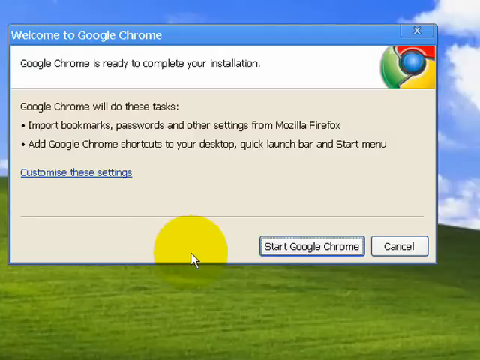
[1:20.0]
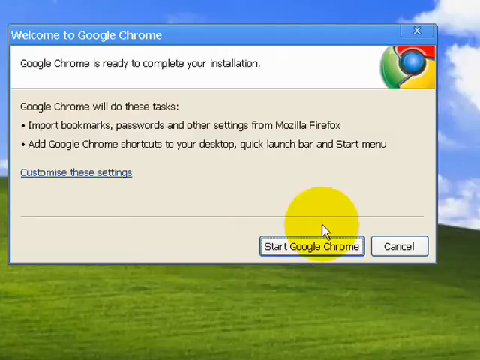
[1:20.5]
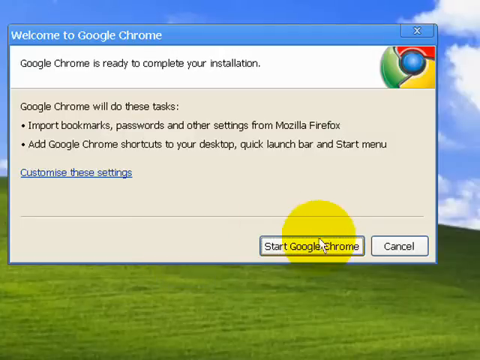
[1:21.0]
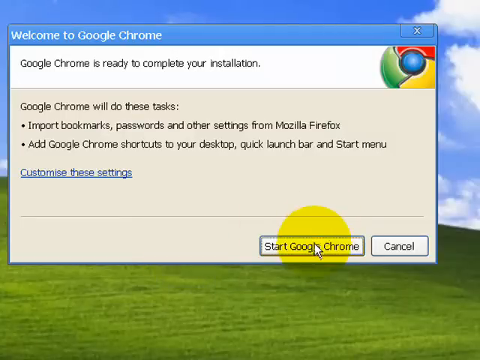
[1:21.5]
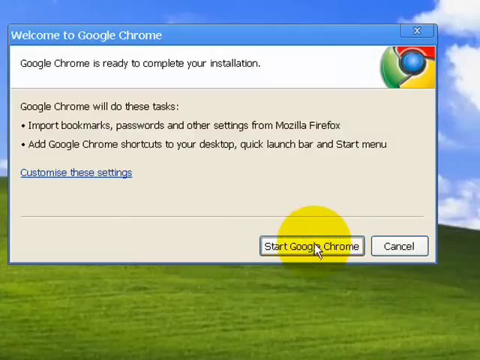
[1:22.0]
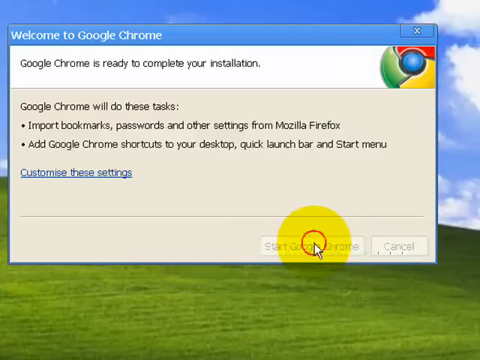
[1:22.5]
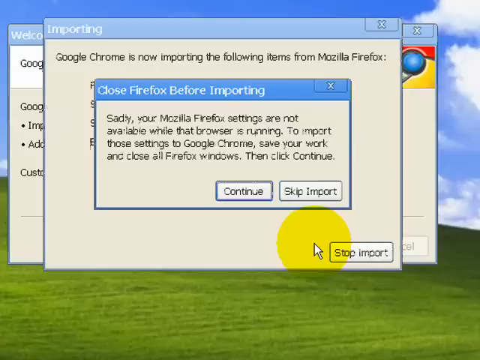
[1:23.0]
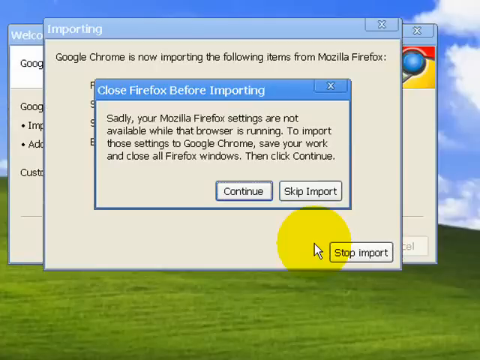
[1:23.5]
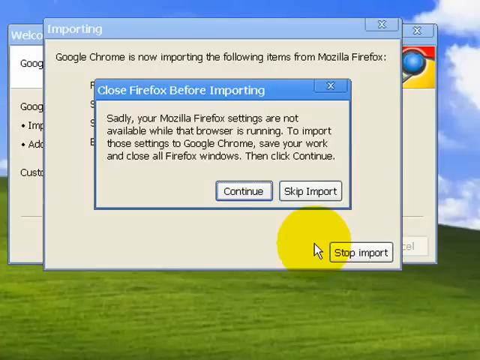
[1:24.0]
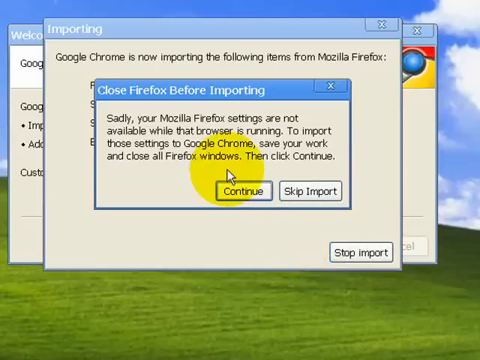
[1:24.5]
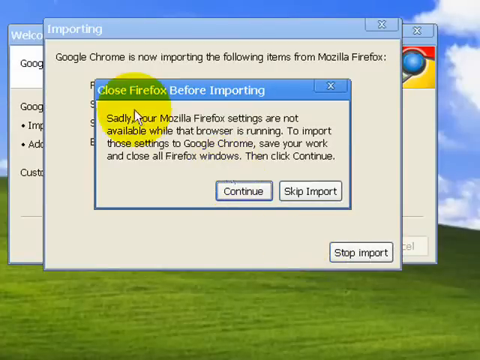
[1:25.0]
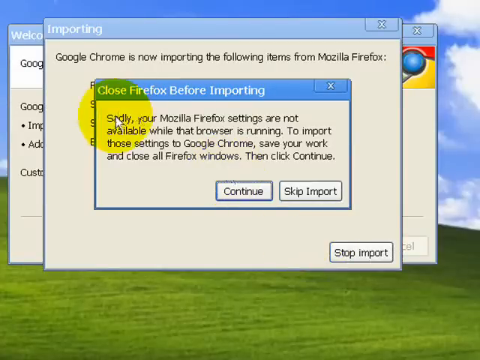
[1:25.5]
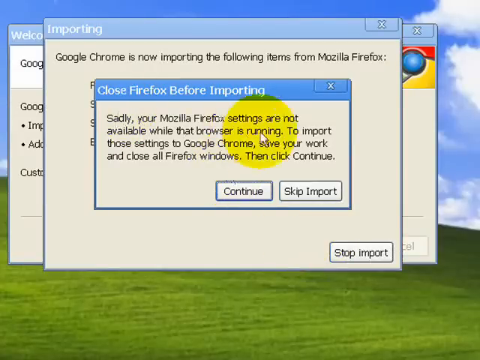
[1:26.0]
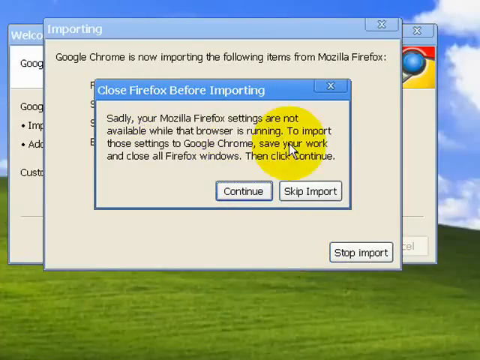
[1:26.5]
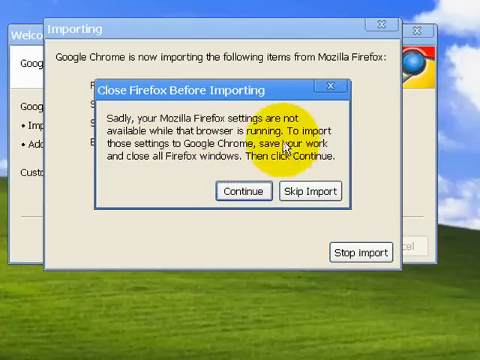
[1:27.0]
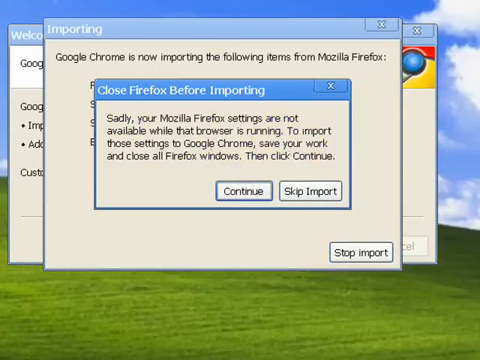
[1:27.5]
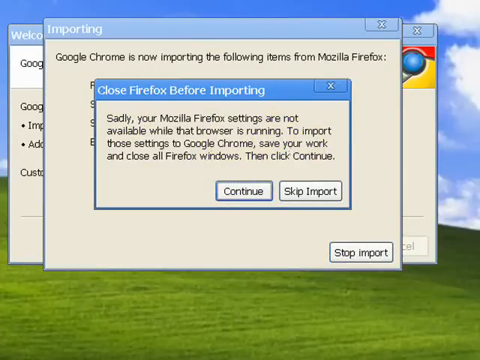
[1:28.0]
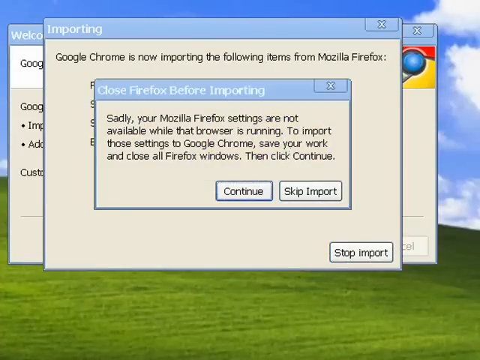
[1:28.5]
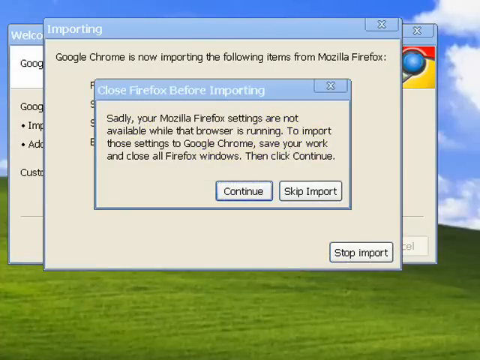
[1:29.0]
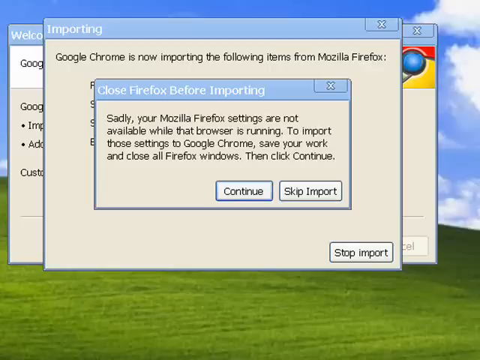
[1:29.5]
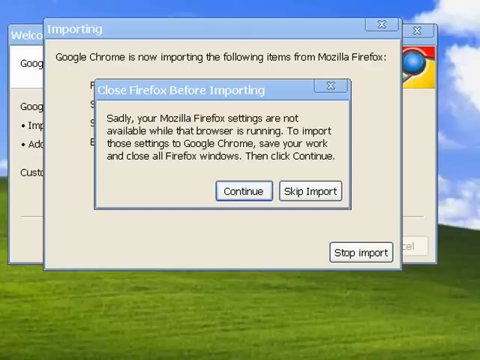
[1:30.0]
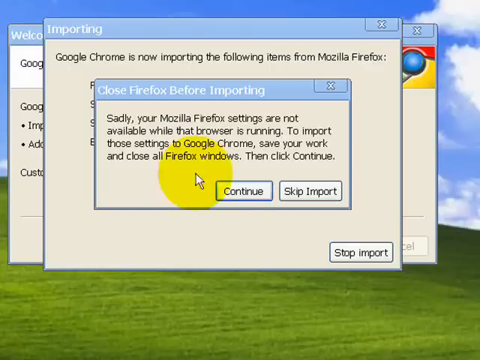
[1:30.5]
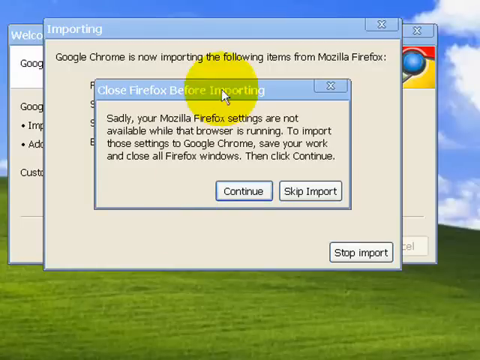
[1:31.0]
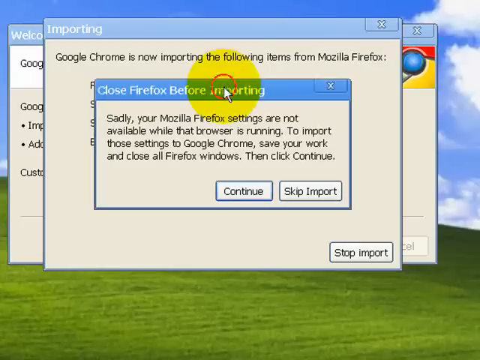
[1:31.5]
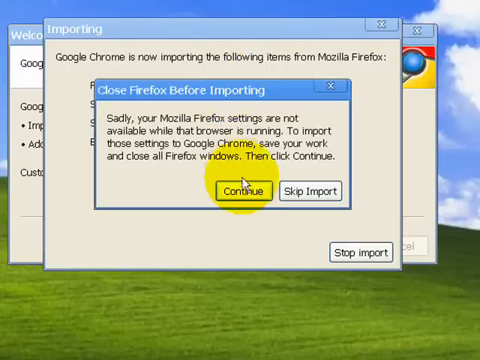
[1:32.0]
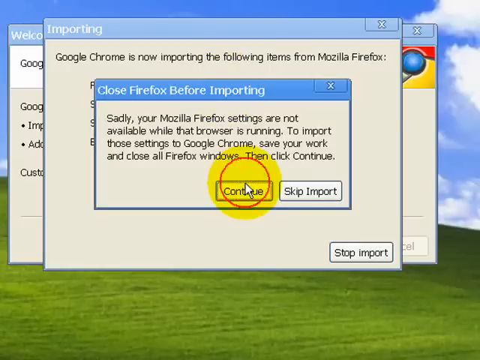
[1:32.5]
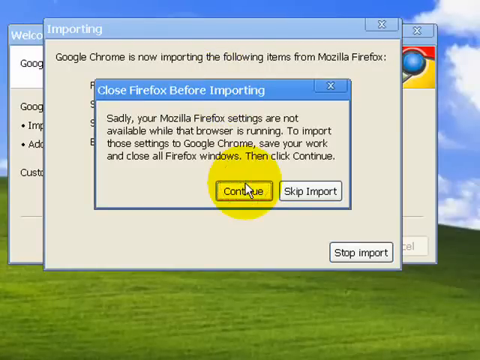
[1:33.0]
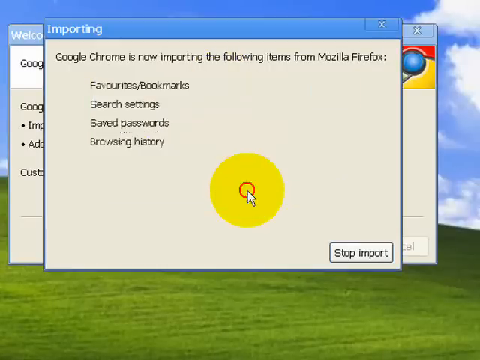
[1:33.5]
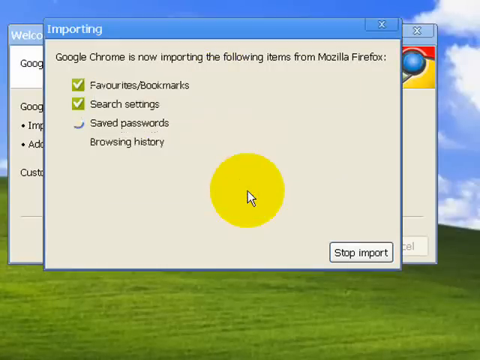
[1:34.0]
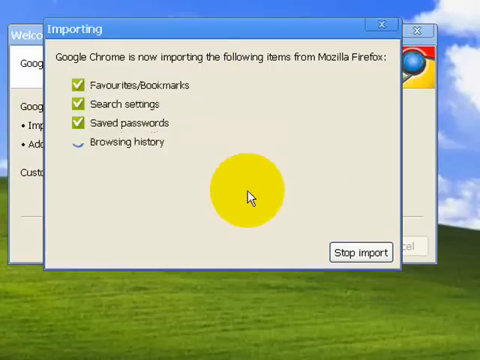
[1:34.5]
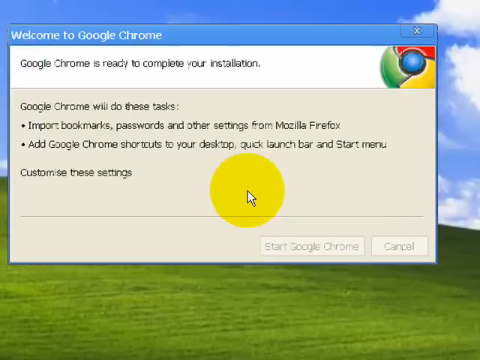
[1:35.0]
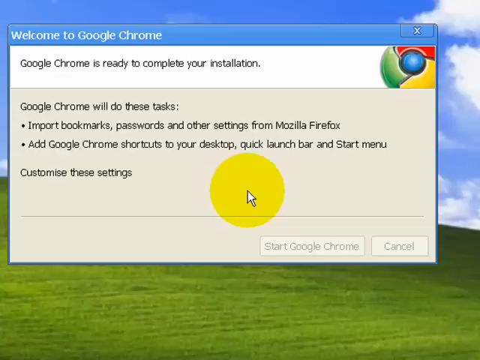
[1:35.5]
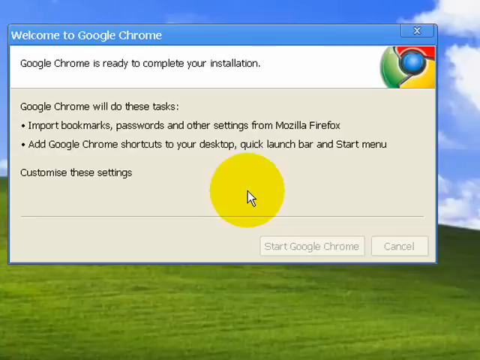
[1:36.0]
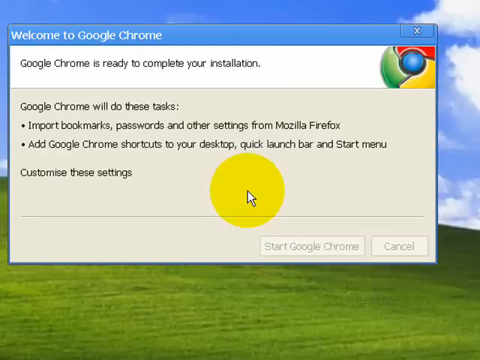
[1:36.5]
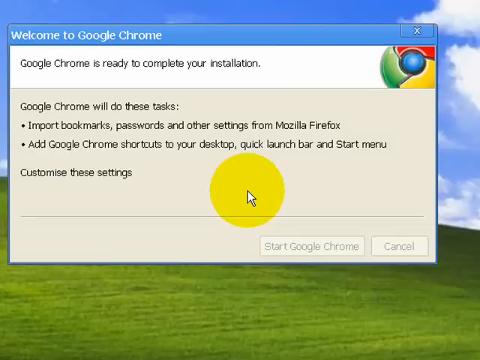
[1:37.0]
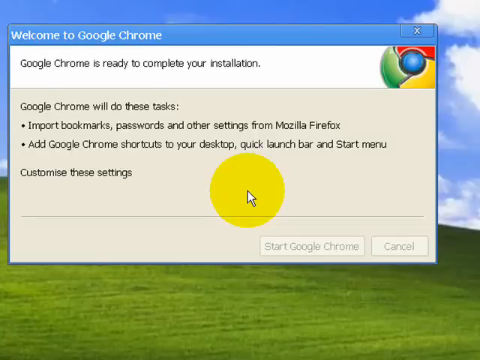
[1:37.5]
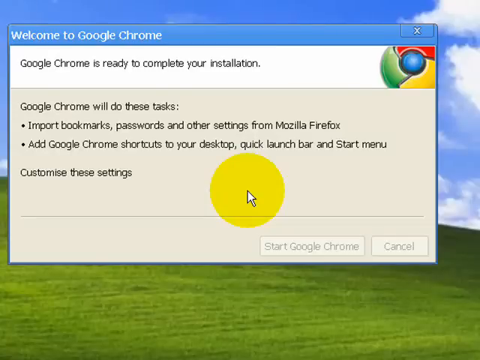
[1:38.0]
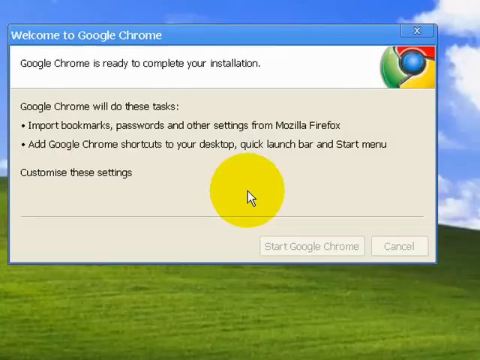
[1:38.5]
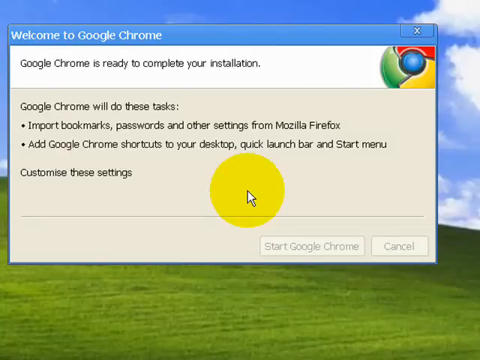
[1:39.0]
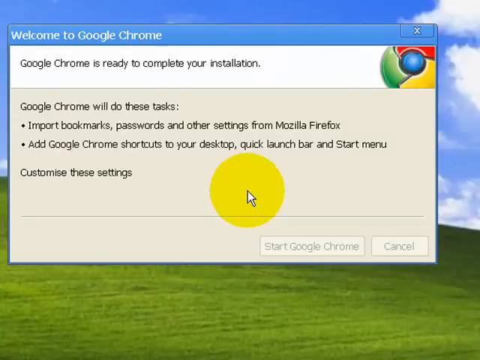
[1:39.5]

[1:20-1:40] The dialog box for installing Google Chrome is open. The mouse pointer, highlighted by a large yellow circle that makes it highly visible, moves to the "start Google Chrome" button and clicks it. A new box appears reading "close Firefox before importing," part of importing bookmarks from Firefox into Google Chrome. The person clicks the "continue" button, and the bookmarks and settings from Mozilla Firefox quickly import into the newly installed Google Chrome browser.